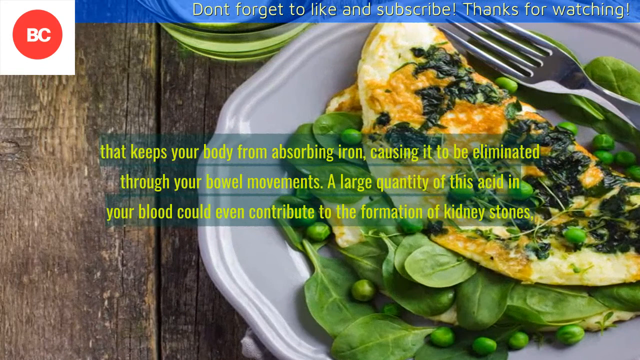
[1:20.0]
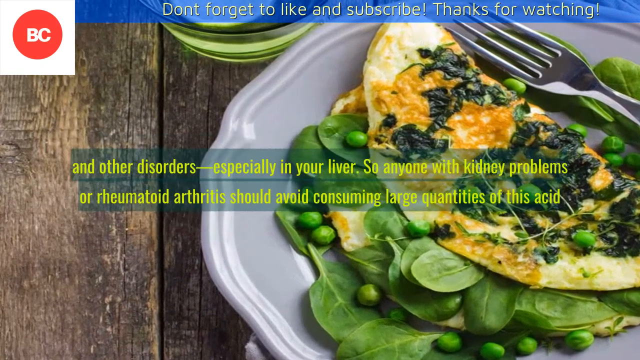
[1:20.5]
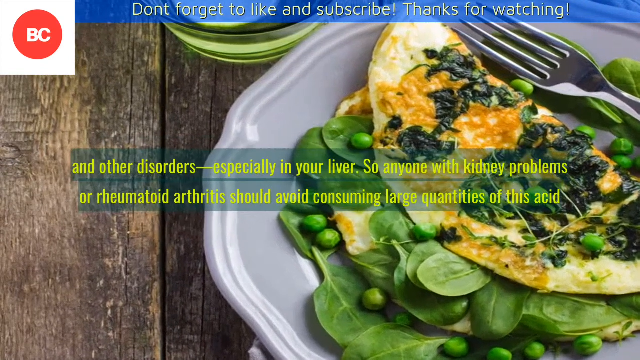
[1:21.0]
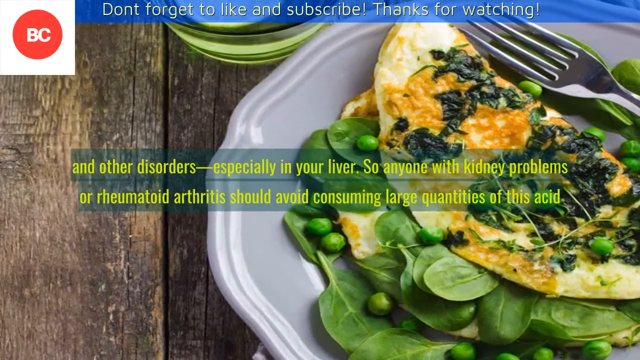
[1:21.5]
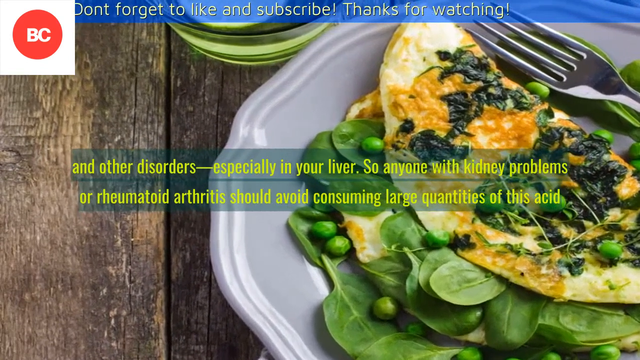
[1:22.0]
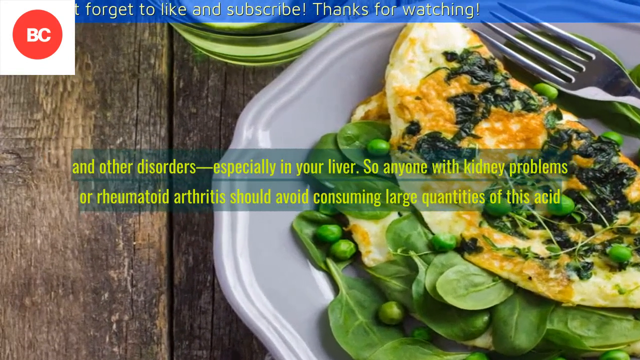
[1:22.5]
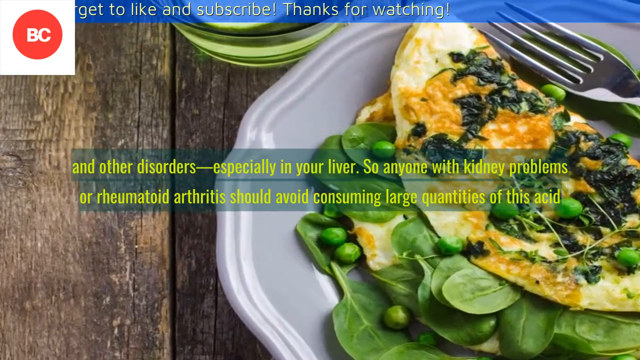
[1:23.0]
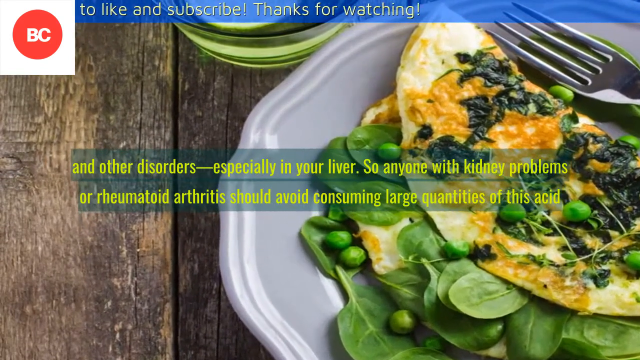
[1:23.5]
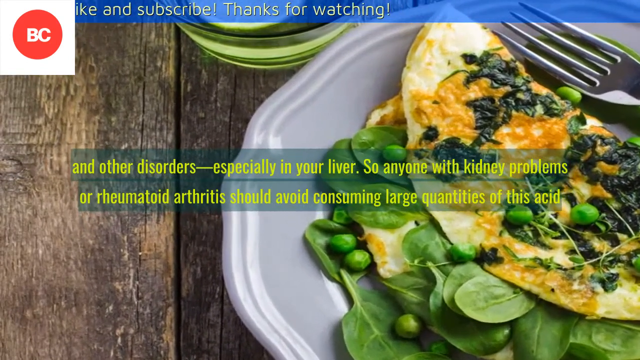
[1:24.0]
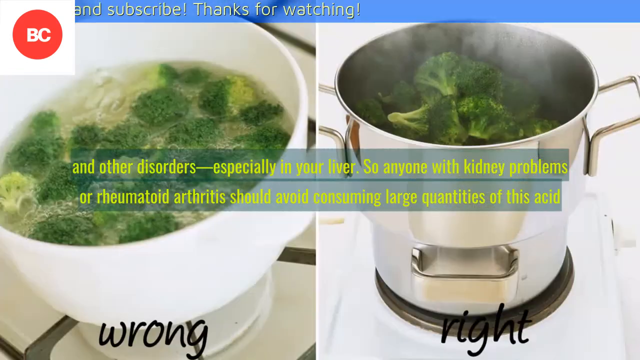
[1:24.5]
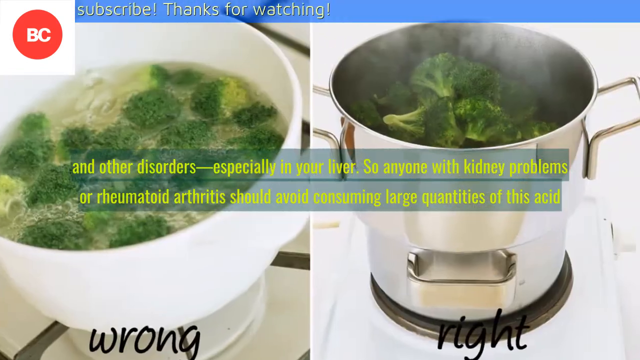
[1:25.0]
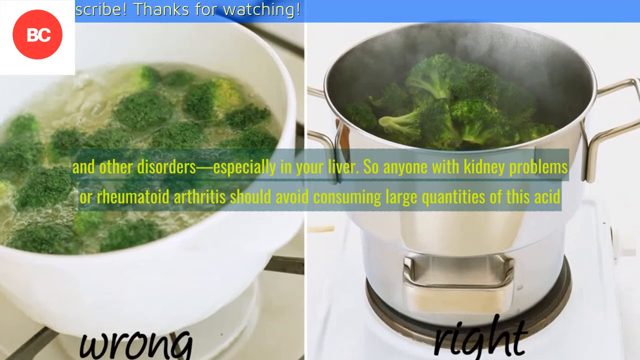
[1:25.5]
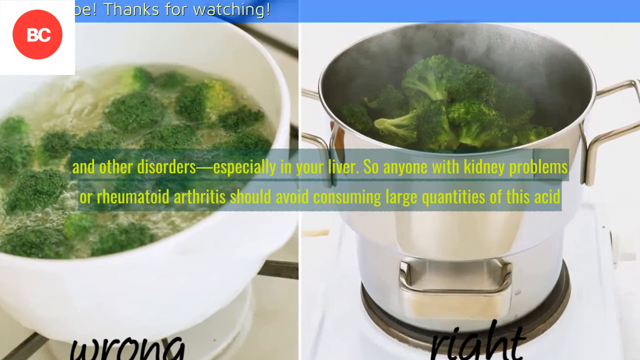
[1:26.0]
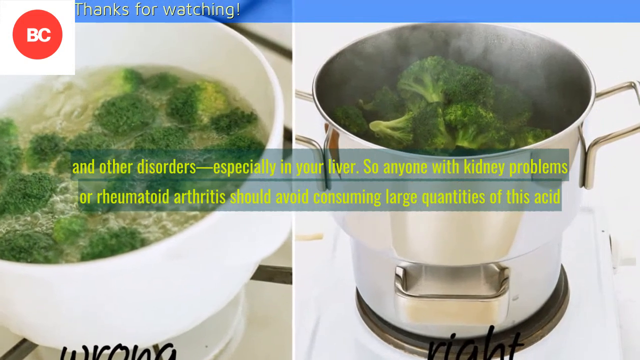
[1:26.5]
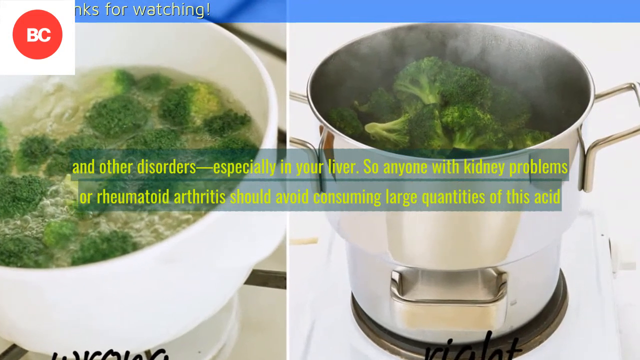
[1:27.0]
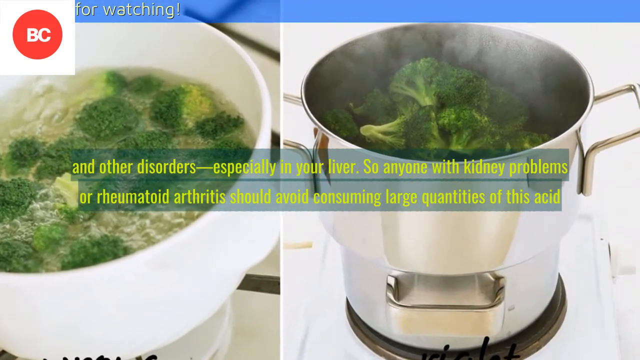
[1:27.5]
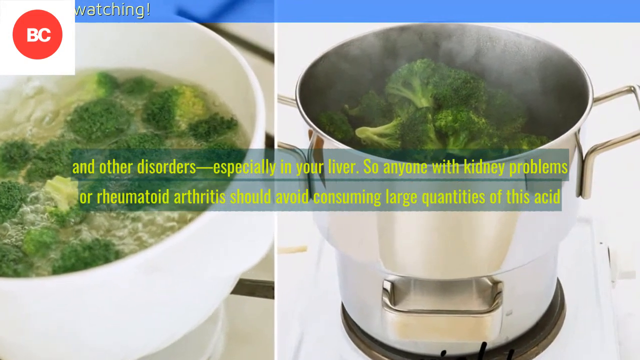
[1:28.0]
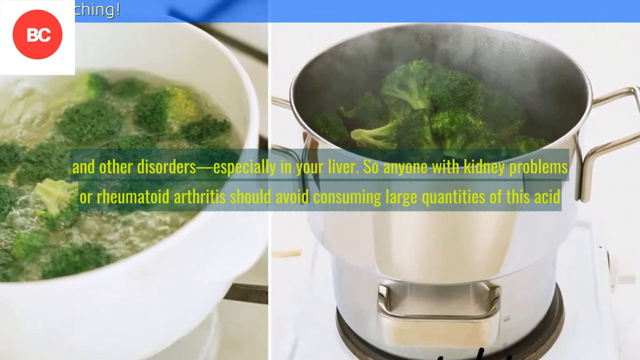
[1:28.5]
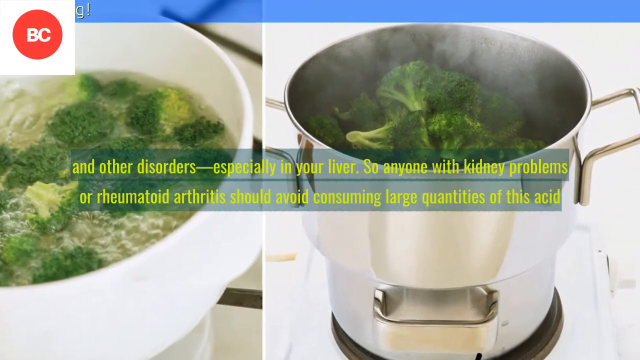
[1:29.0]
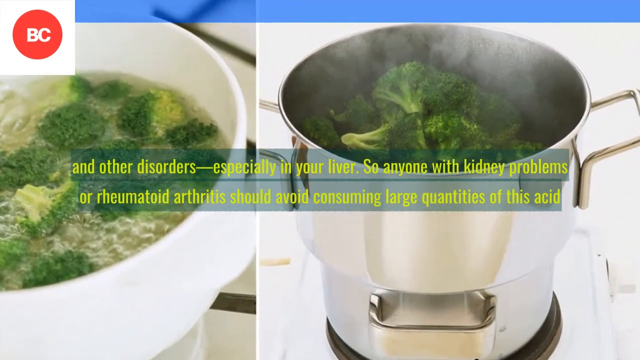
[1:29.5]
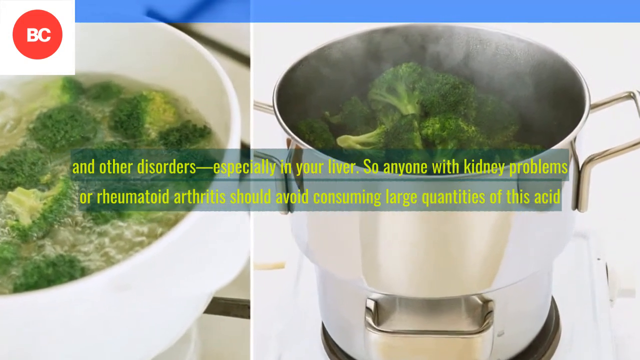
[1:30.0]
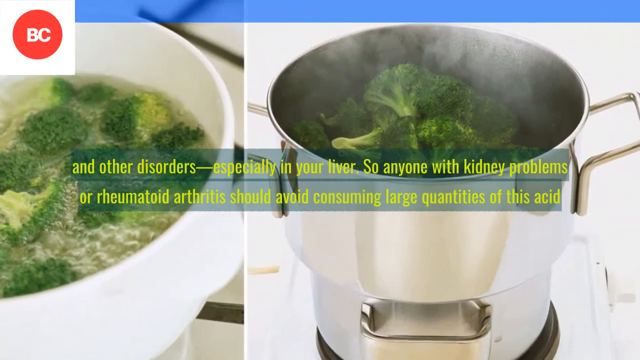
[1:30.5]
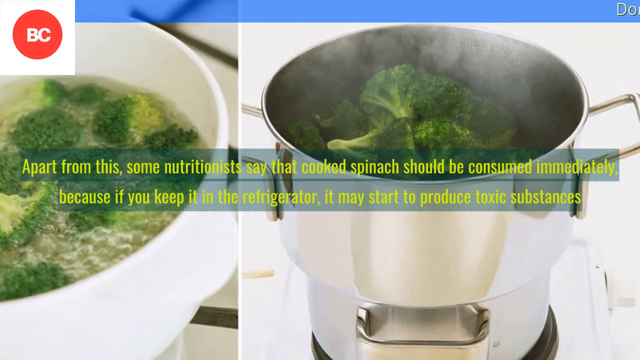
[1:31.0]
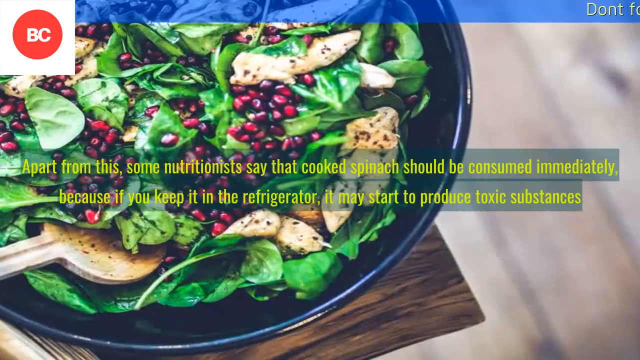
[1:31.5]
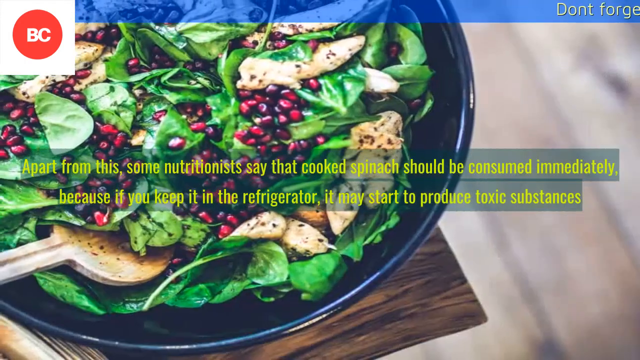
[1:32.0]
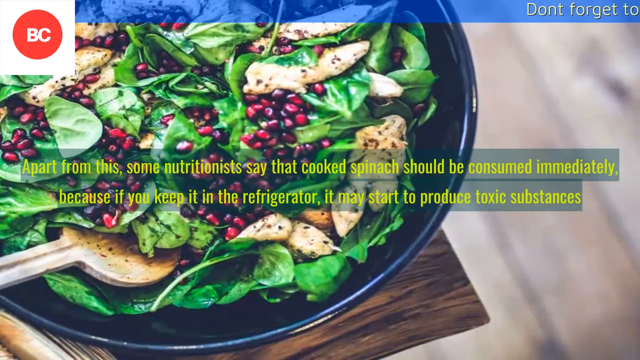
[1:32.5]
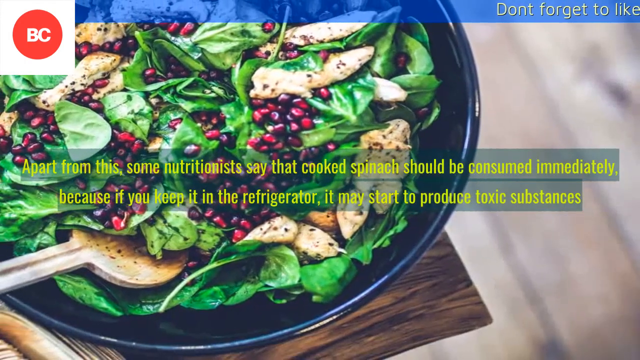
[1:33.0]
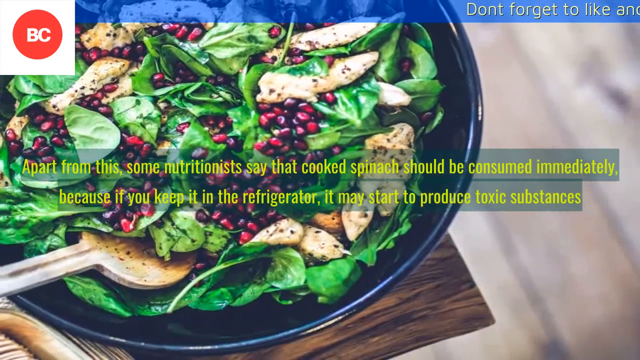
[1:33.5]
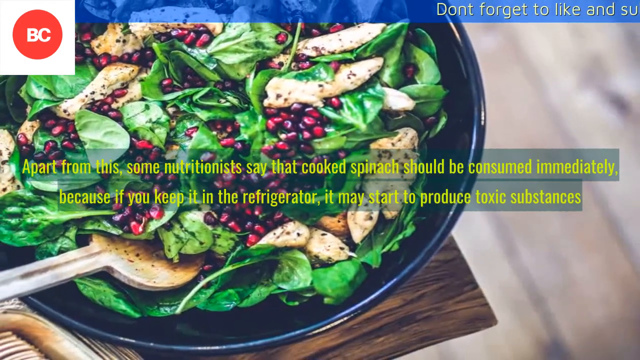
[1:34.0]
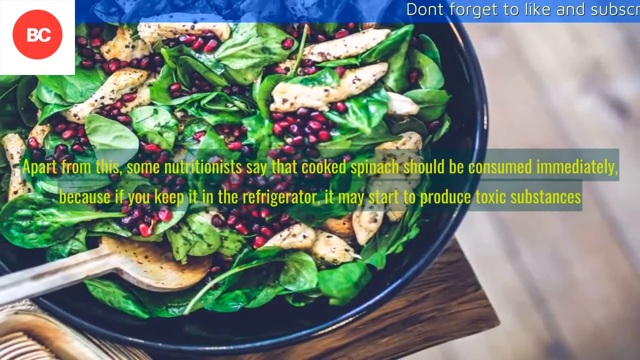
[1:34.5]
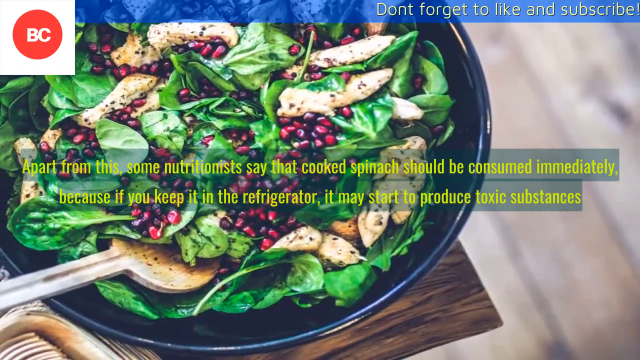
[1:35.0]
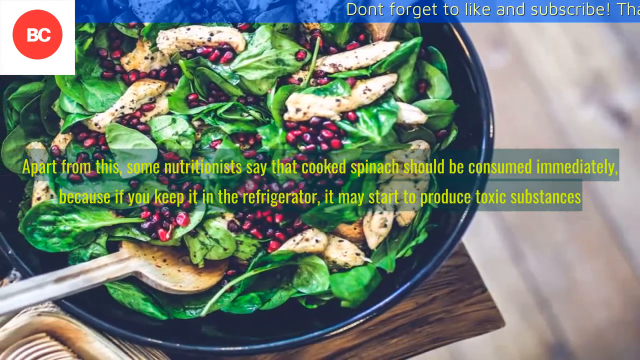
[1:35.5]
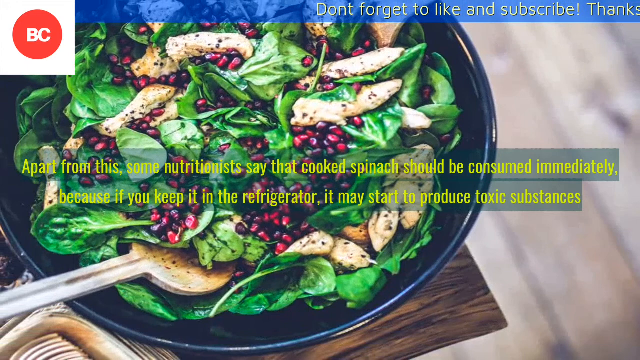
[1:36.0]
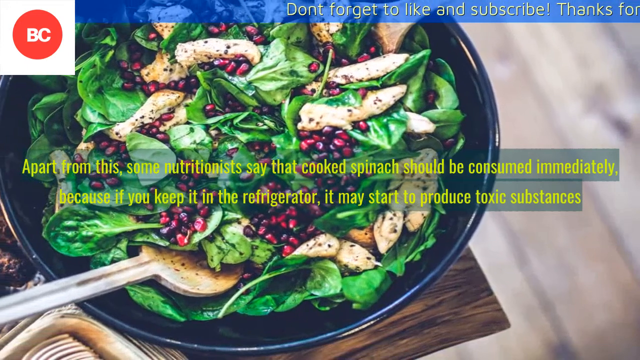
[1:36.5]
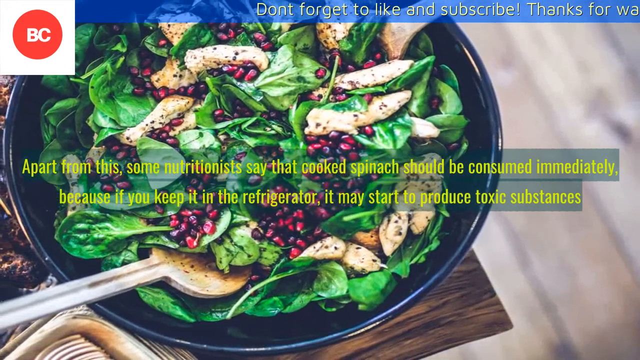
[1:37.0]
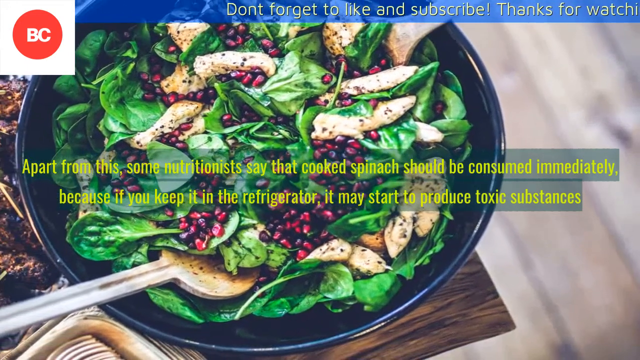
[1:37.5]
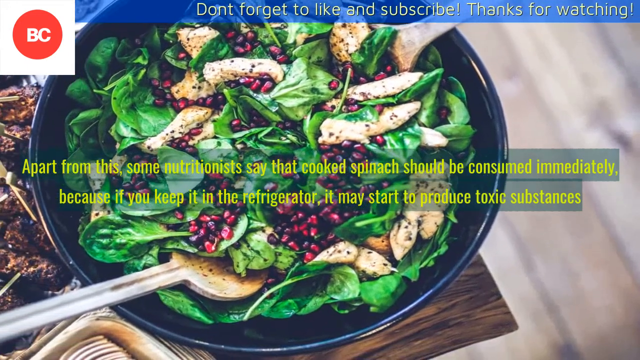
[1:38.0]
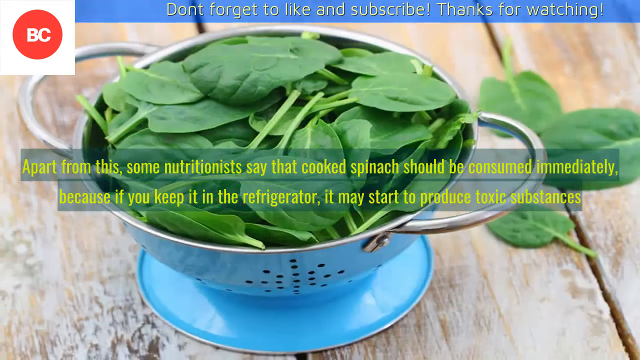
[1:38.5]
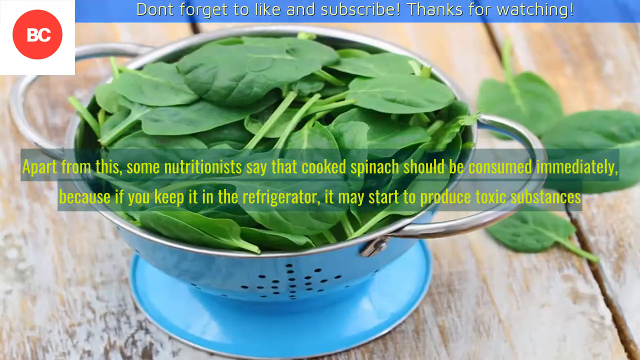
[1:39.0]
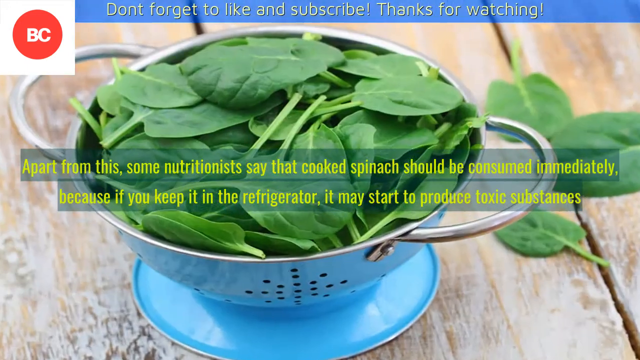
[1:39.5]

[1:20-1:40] On the right side there is a white plate with spinach, eggs and peas, and a silver steel fork is in the far top right corner. Text keeps changing on the screen, about why spinach may not be as beneficial as originally thought. The image changes to another spinach dish; on the left there is broccoli in a pot and broccoli in a bowl. The images zoom in on certain areas, such as the top right. The image changes again to another spinach dish, with more yellow text in the foreground about why it may not be as beneficial as thought. In the back left there is a black bowl filled with spinach and pomegranate seeds, and the image is zoomed in on. Finally, a strainer full of spinach appears.